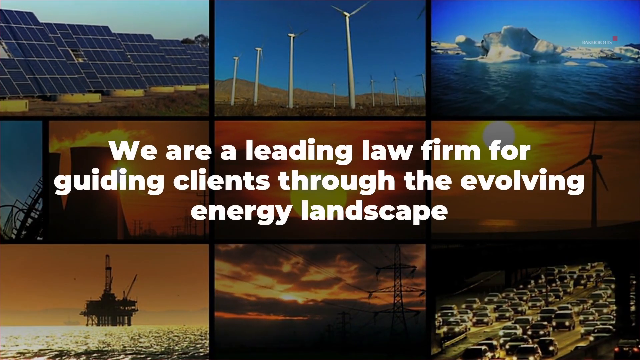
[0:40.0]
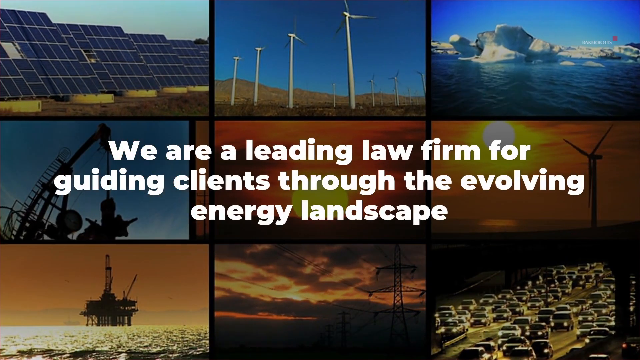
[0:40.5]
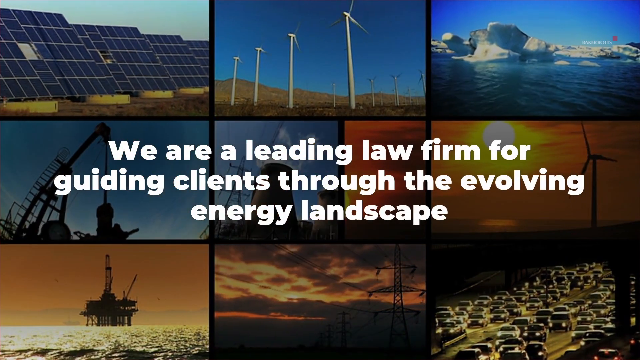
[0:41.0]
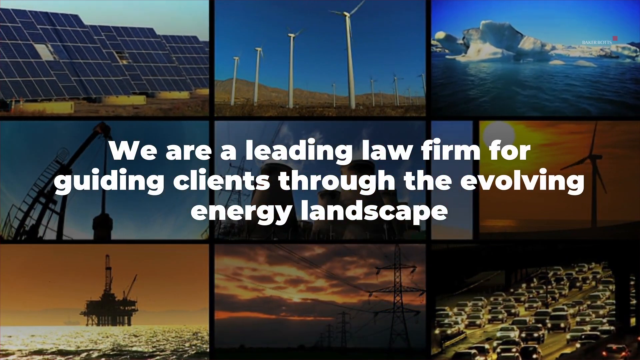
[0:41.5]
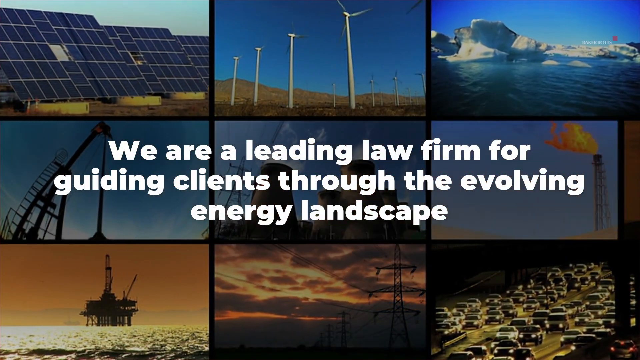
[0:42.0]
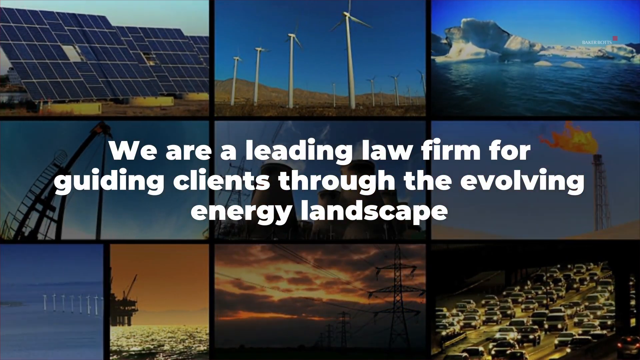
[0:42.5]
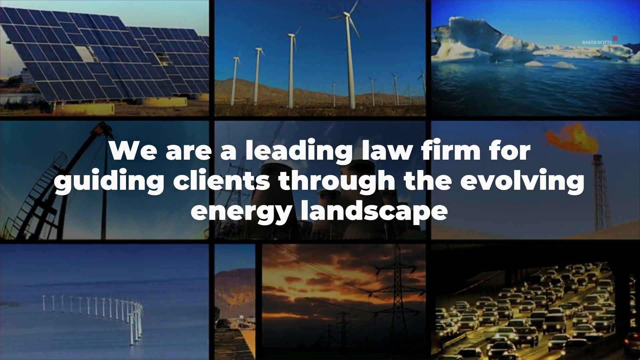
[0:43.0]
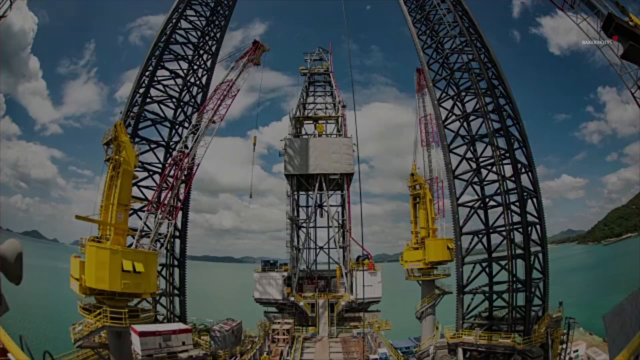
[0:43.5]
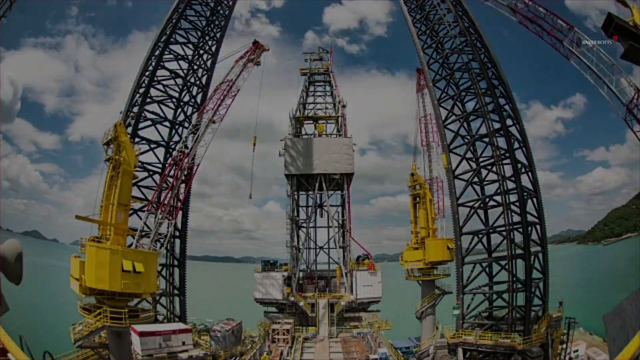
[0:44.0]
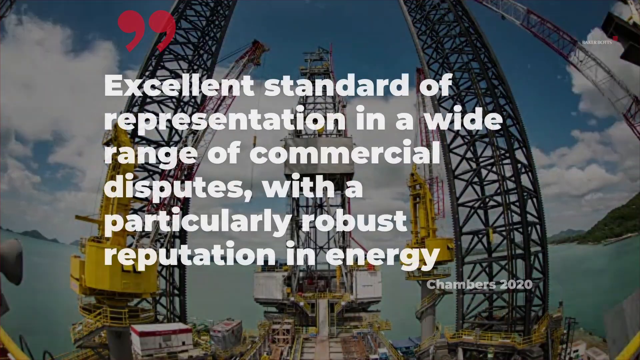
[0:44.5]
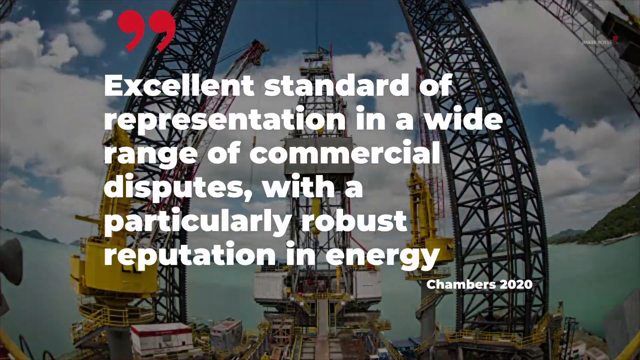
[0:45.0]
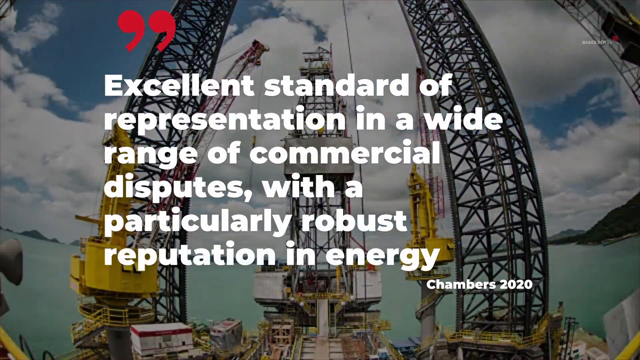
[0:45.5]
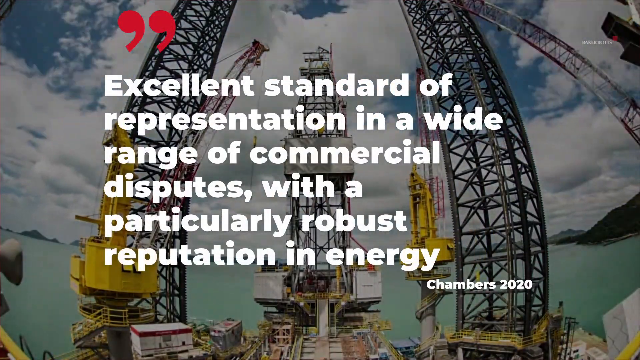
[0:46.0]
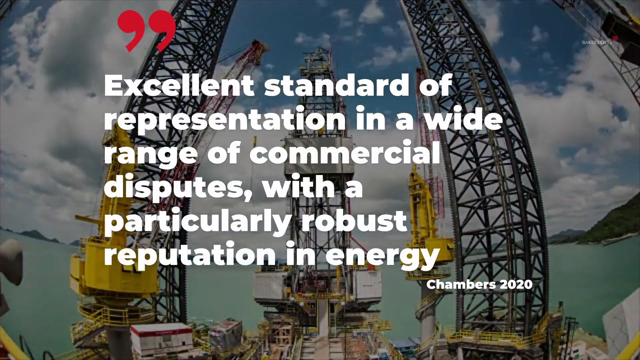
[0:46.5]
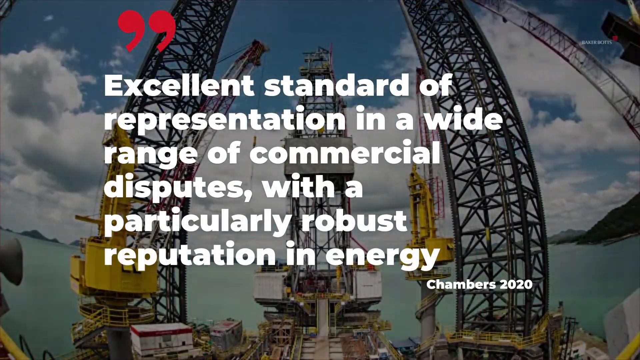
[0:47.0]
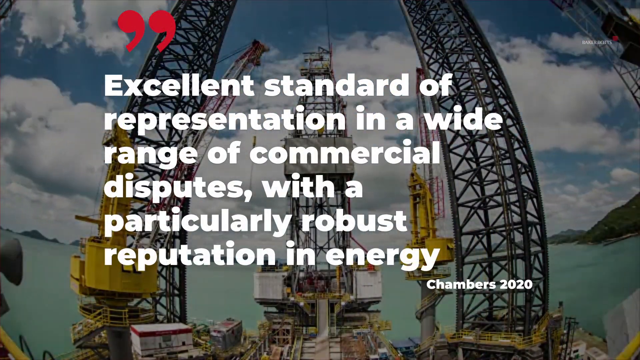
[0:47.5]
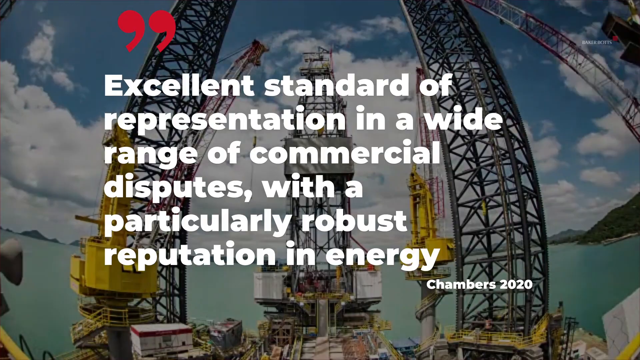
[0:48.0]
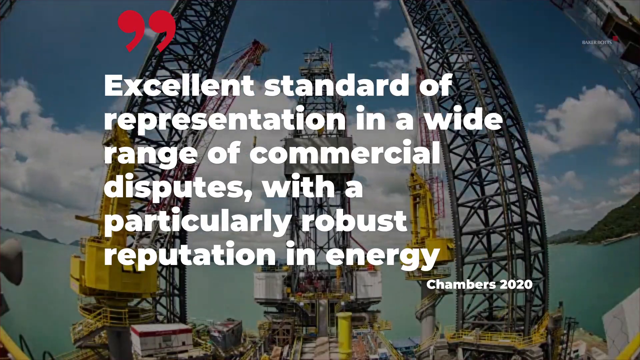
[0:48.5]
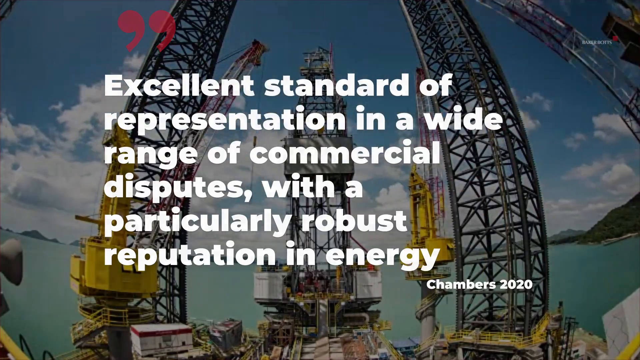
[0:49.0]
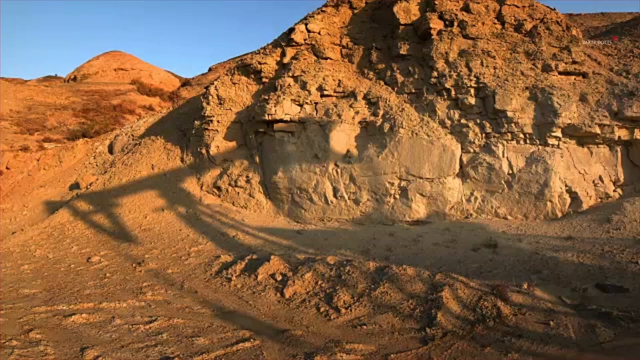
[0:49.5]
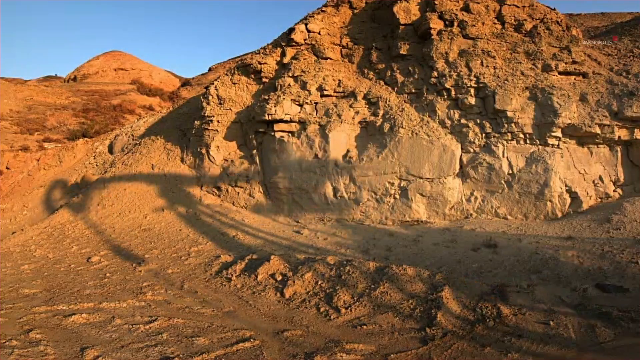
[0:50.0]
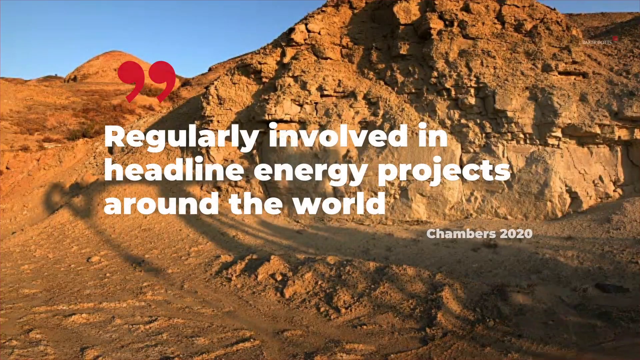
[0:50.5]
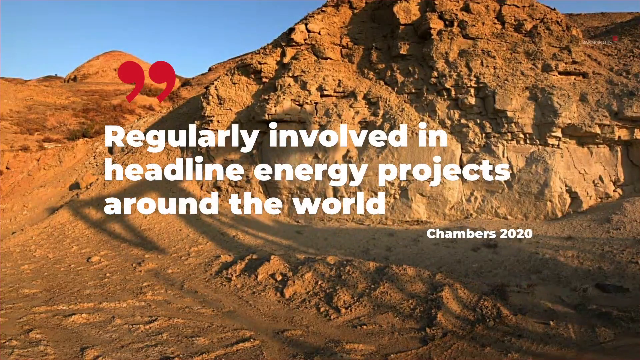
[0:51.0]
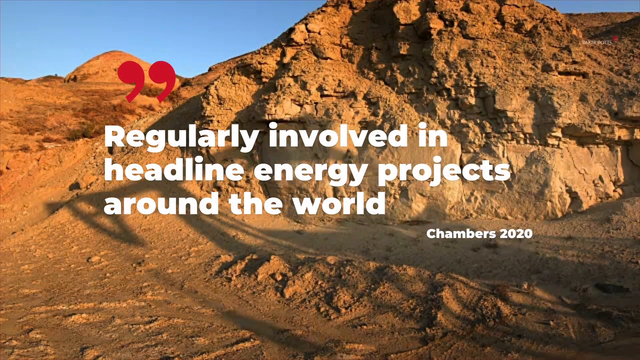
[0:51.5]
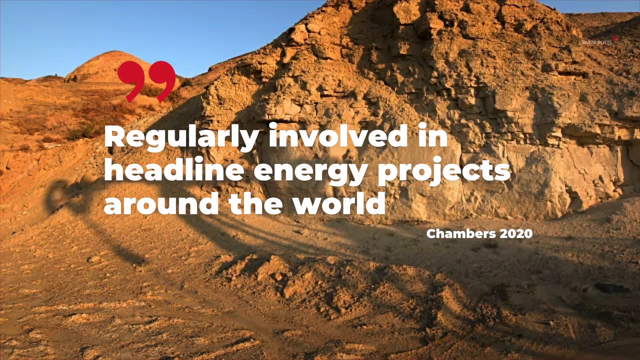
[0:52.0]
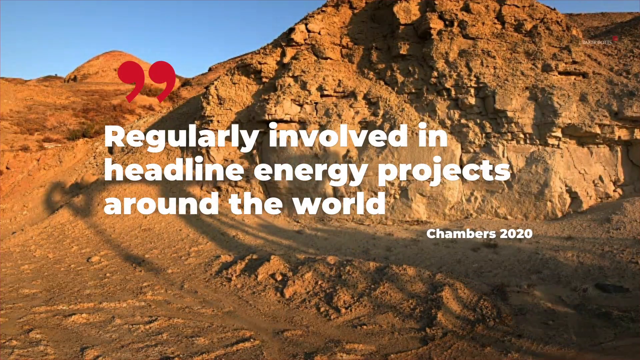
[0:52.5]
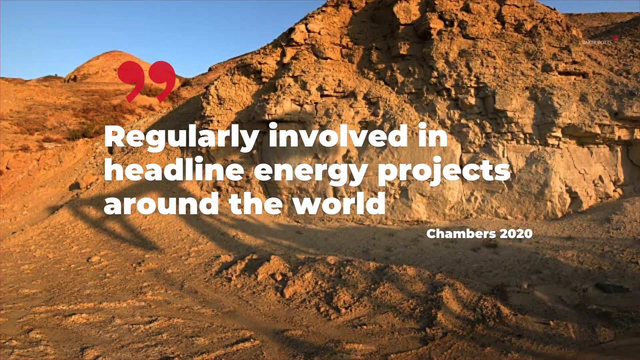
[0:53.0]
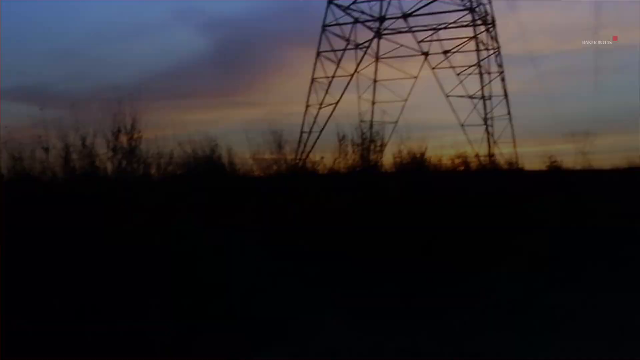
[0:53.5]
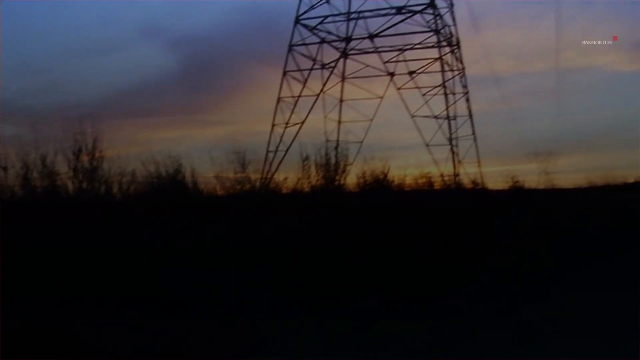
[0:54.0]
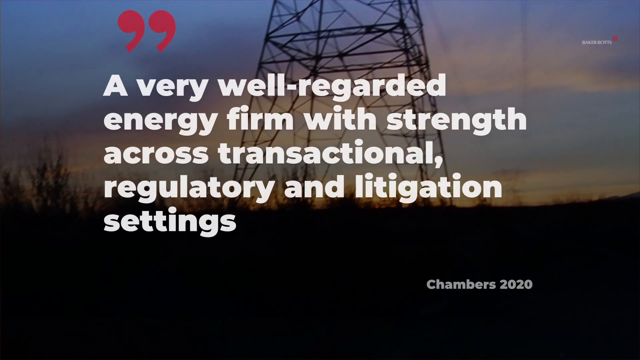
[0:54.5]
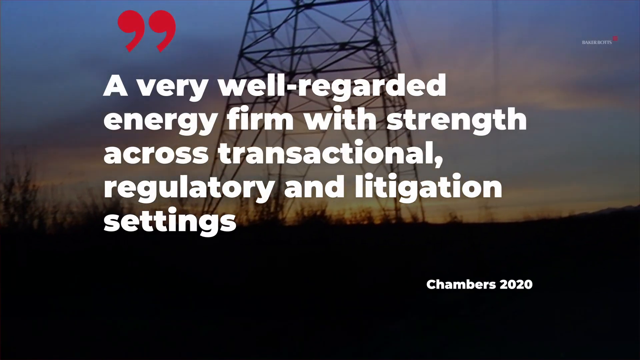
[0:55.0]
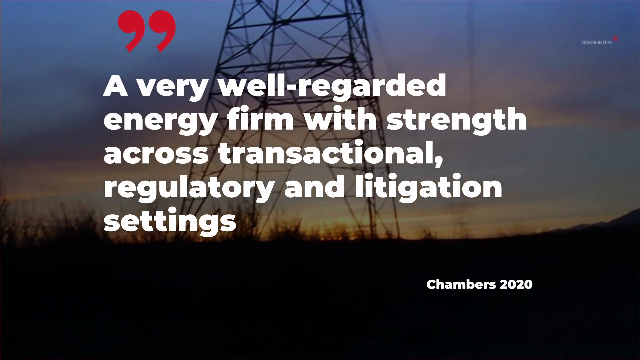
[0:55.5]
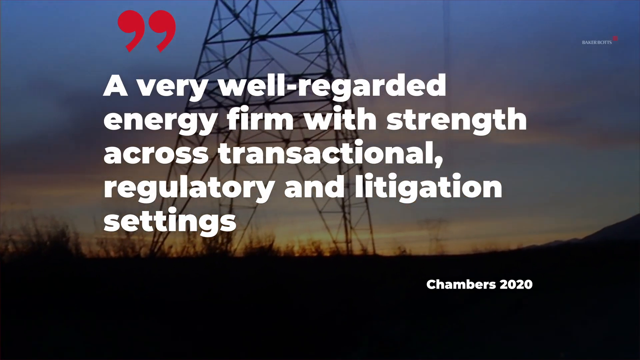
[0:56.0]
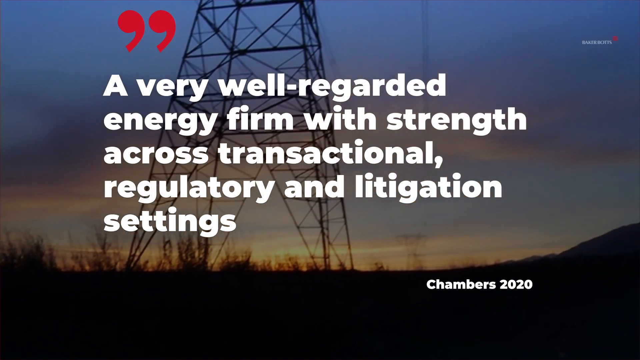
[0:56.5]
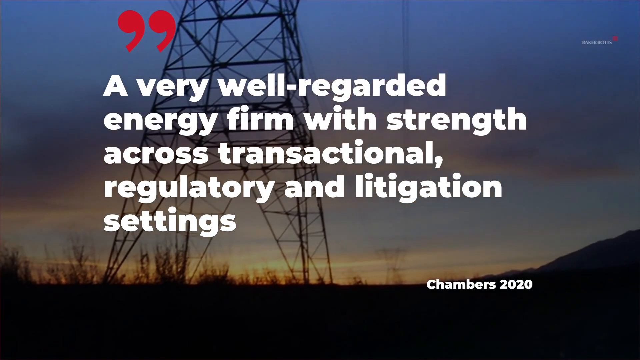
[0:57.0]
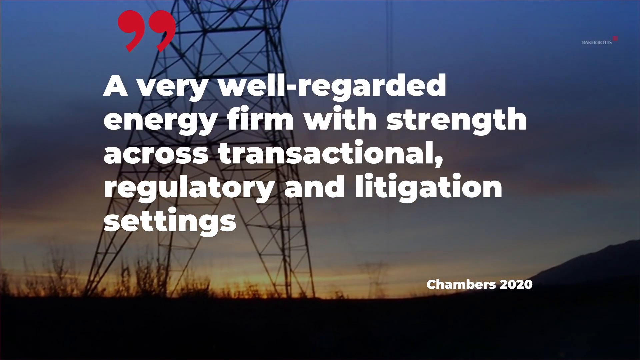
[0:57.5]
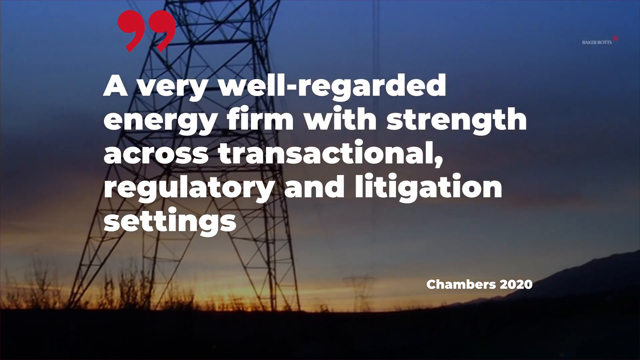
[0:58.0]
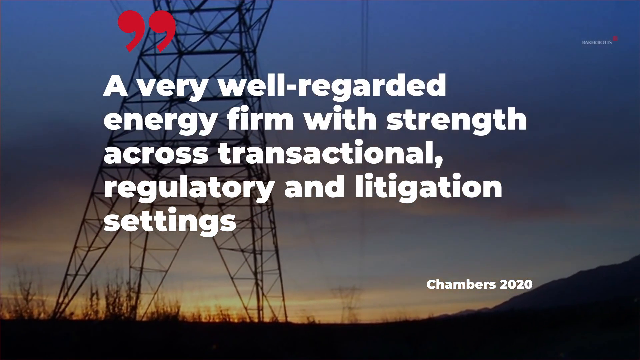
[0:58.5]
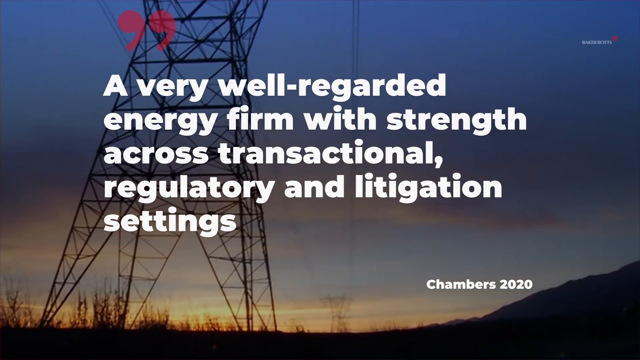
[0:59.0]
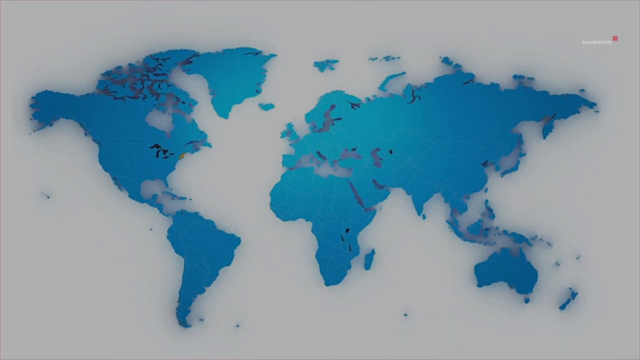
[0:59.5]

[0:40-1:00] Men wearing construction caps work on a high power line; there appear to be two of them. A ticker tape that says "steel prices collapse, drops 100 points" appears, held in someone's hands. The text on the screen says "across countless changes in administration, two world wars, one depression and multiple recessions." A black and white scene follows, probably of New York City, with hundreds of people walking on the street and lots of cars moving in a very busy scene. Signs displayed on buildings, including "army chief," are like ticker signs that display dates, time, weather and similar things. A sort of tic-tac-toe setup of different scenes then appears on the screen: a solar-powered farm, a wind farm, an iceberg, another wind farm with the sun, nuclear power, an offshore oil platform, high wires carrying electricity, and a highway full of cars. Text says "we are a leading law firm for guiding clients through the evolving energy landscape," and the scenes continue to change. Offshore oil rigs appear with the text "an excellent standard of representation in a wide range of commercial disputes with a particularly robust reputation in energy." A scene of a sand farm or perhaps a gravel pit follows with the text "regularly involved in hot headline energy projects around the world, Chambers 2020." More electricity high wires appear with "a very well-regarded energy firm with strength across transactional regulatory and litigation settings, Chambers 2020."